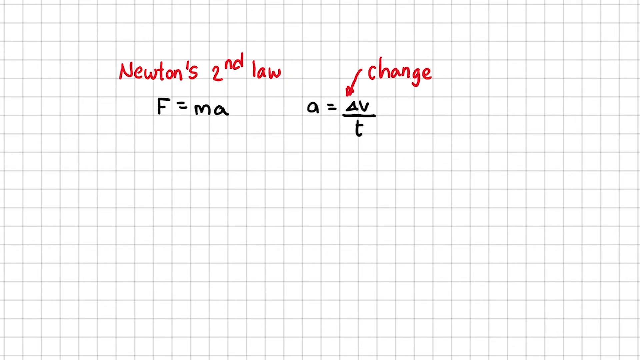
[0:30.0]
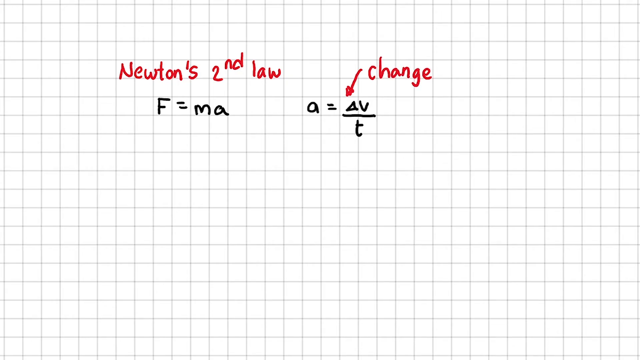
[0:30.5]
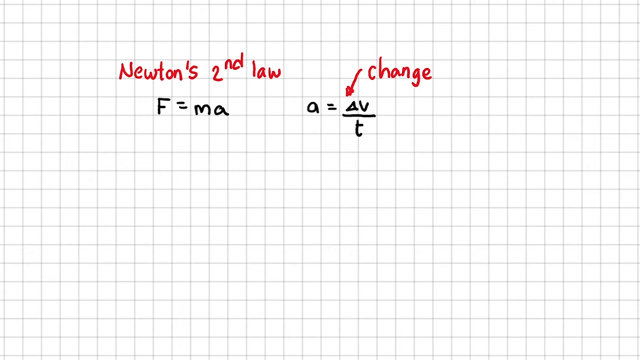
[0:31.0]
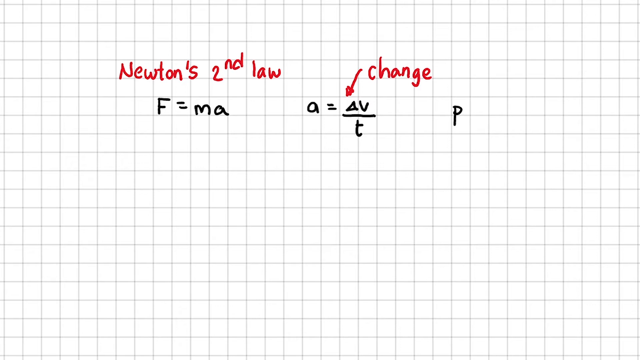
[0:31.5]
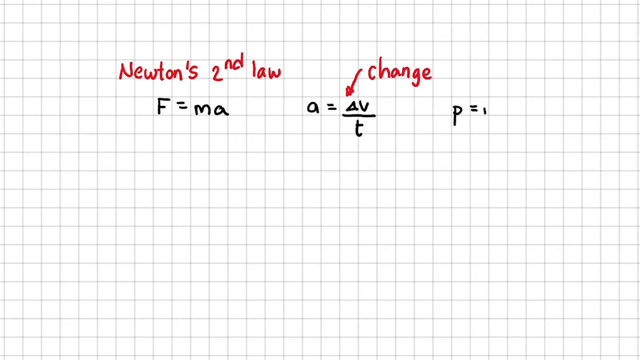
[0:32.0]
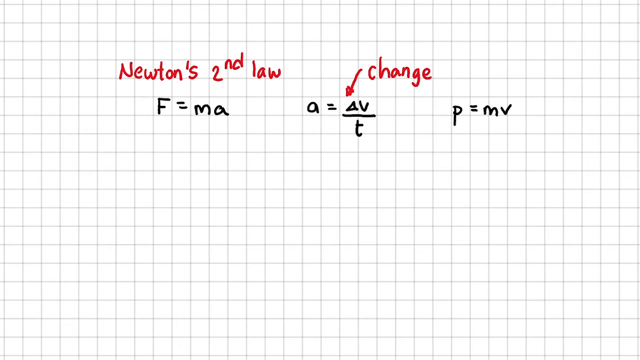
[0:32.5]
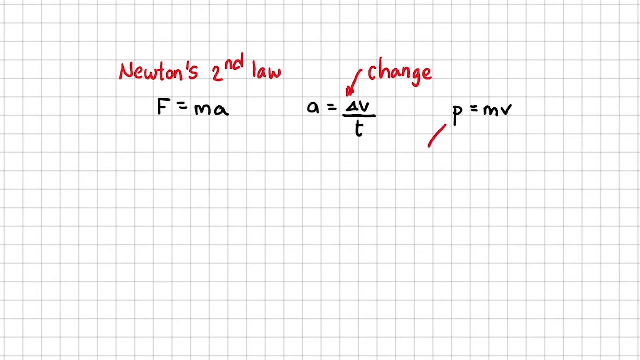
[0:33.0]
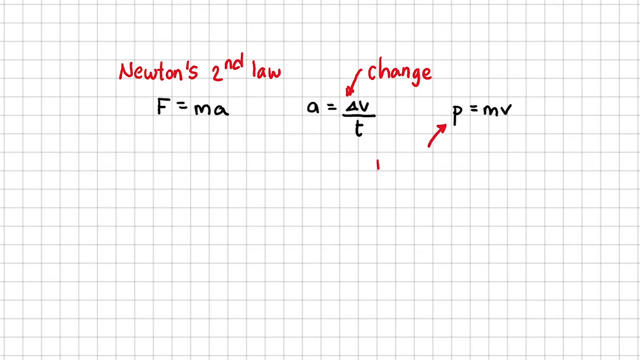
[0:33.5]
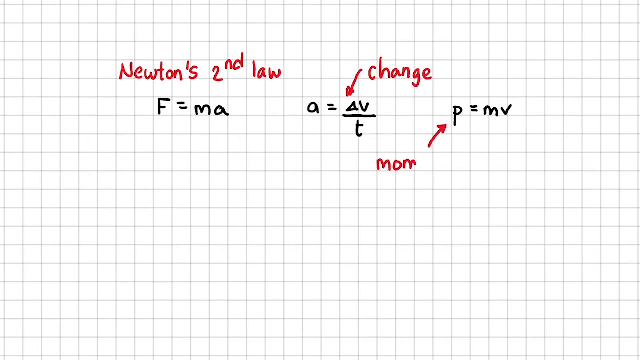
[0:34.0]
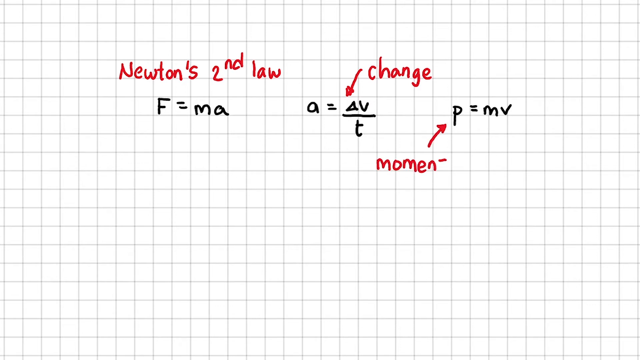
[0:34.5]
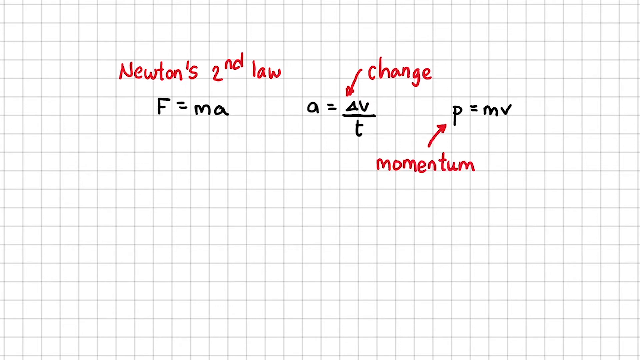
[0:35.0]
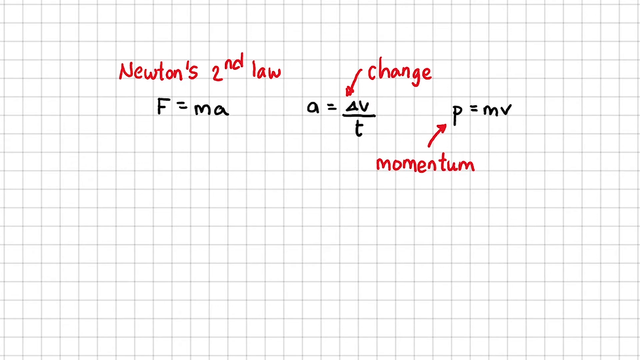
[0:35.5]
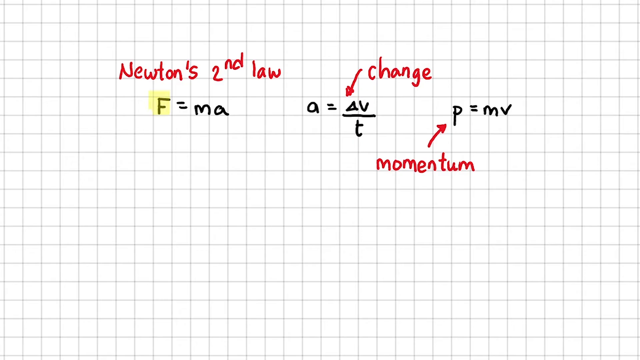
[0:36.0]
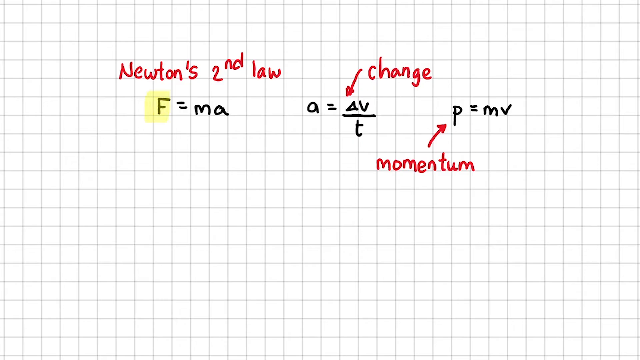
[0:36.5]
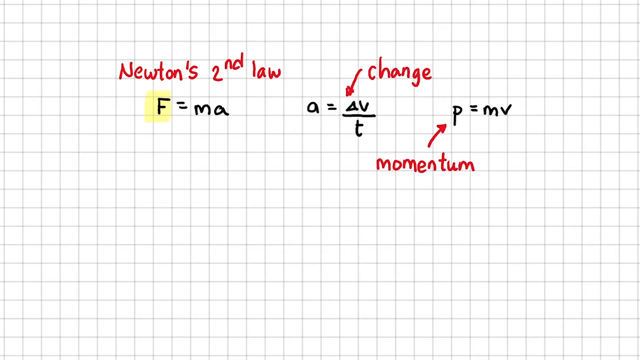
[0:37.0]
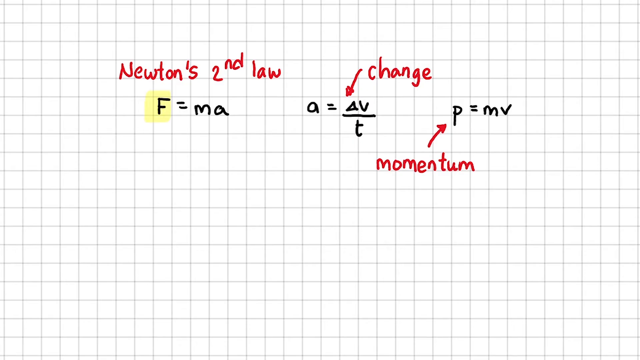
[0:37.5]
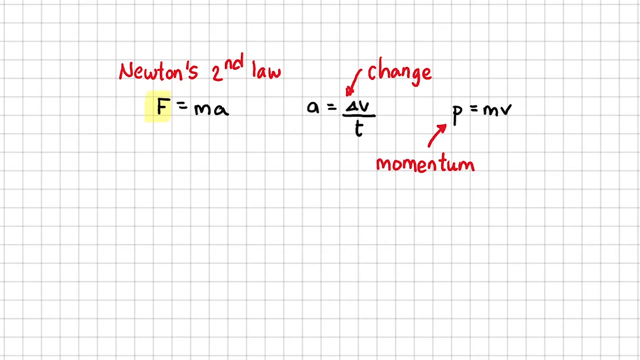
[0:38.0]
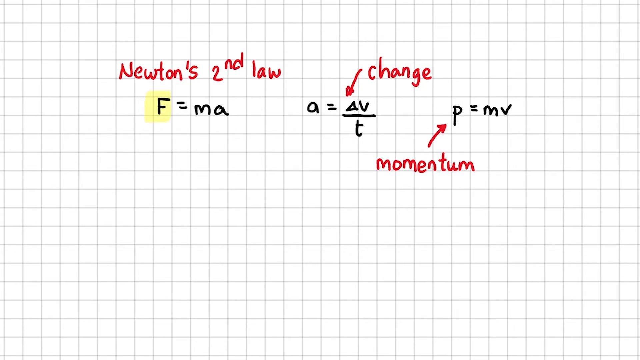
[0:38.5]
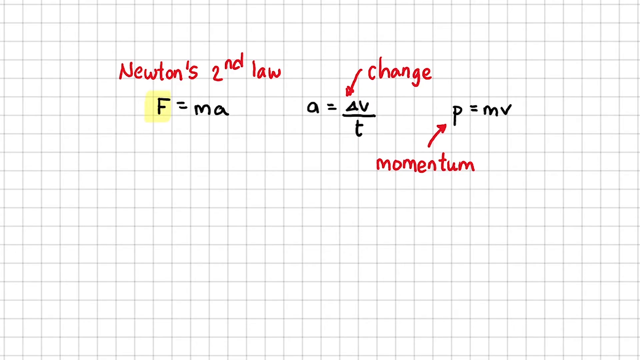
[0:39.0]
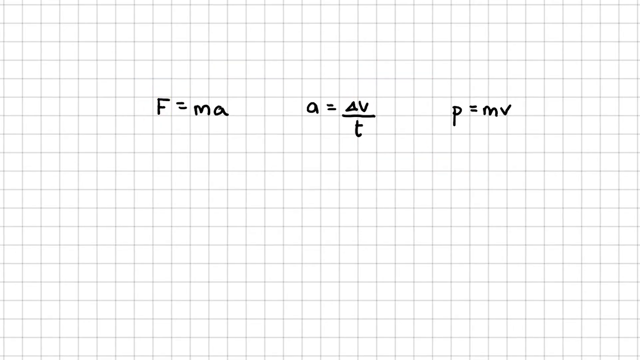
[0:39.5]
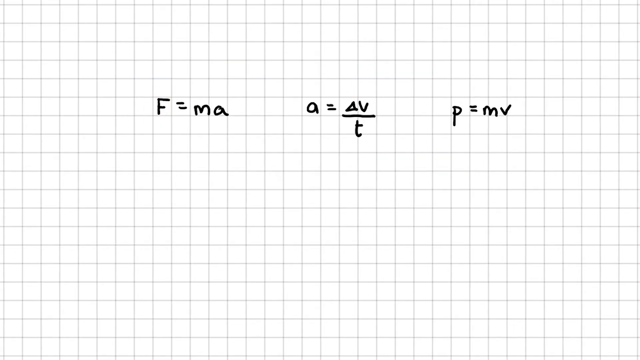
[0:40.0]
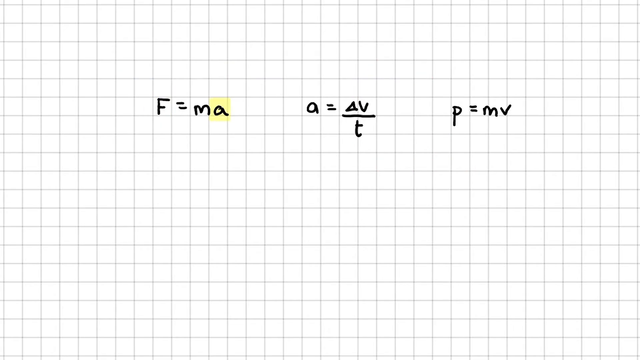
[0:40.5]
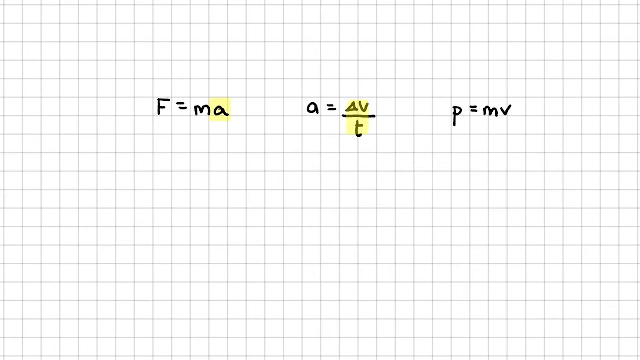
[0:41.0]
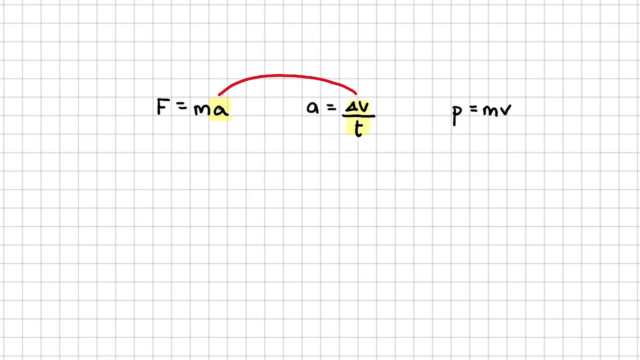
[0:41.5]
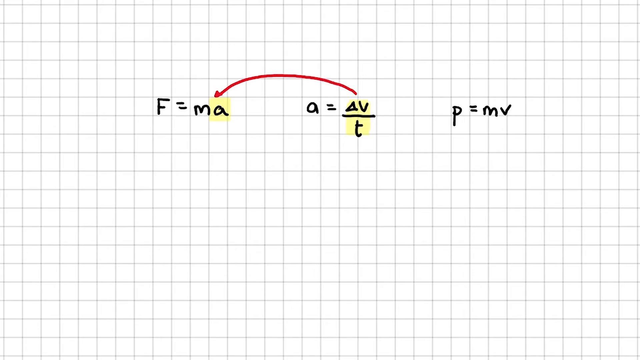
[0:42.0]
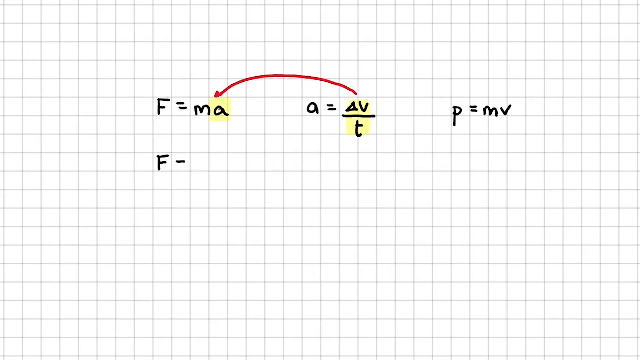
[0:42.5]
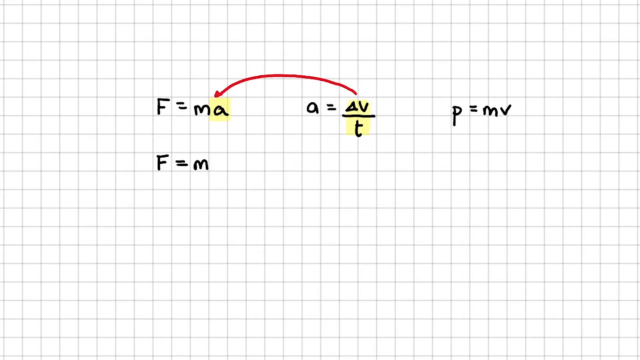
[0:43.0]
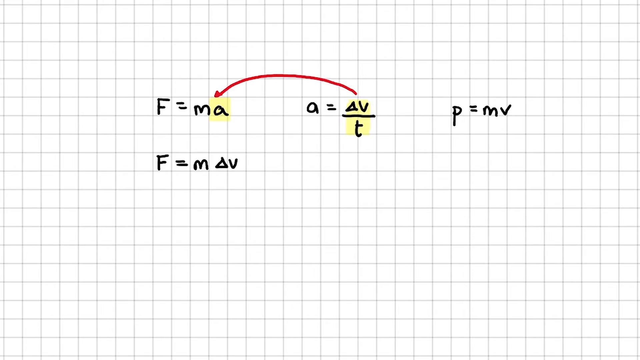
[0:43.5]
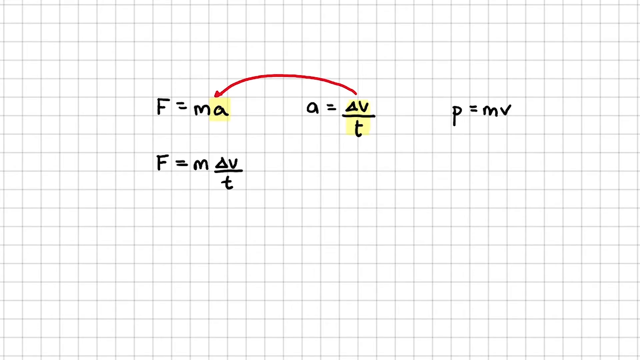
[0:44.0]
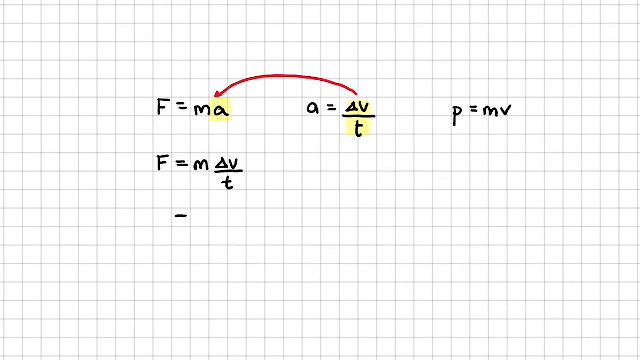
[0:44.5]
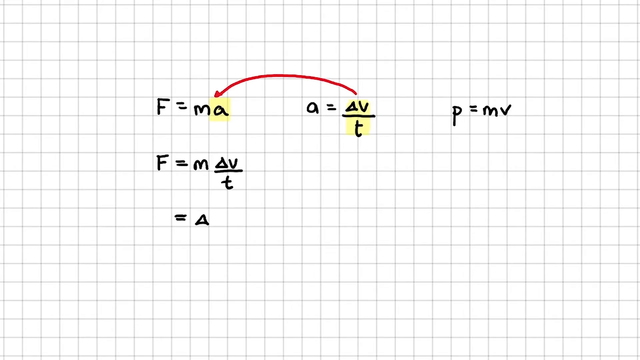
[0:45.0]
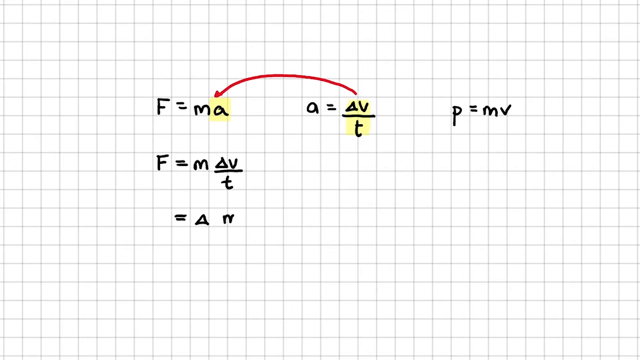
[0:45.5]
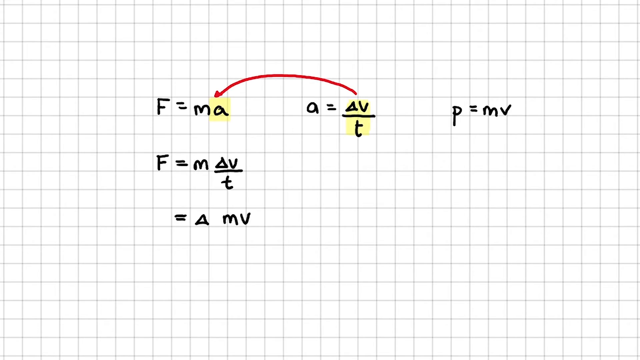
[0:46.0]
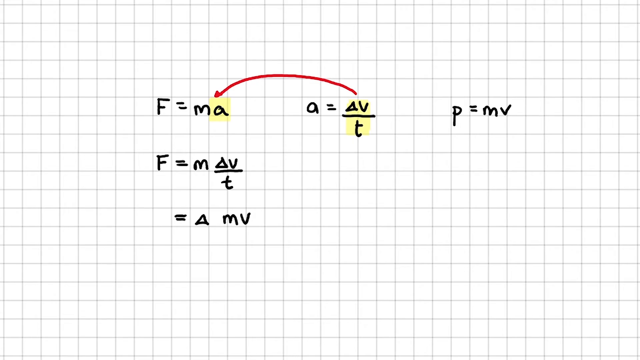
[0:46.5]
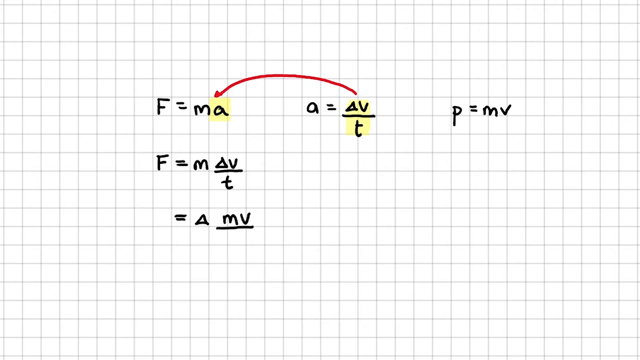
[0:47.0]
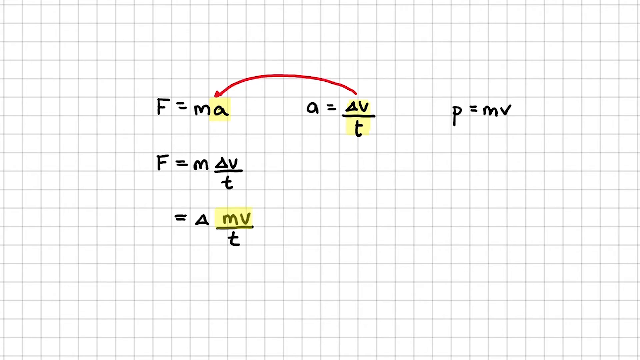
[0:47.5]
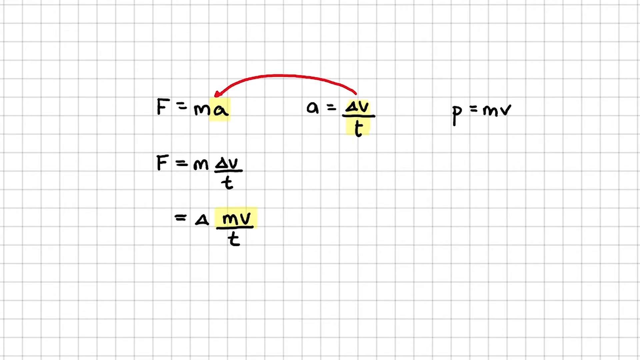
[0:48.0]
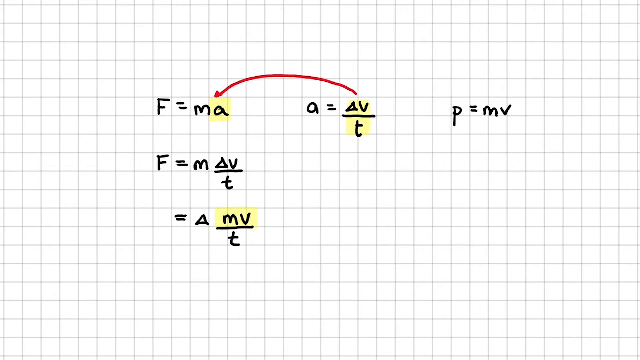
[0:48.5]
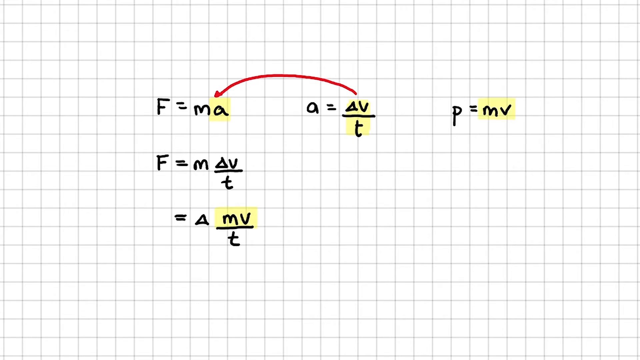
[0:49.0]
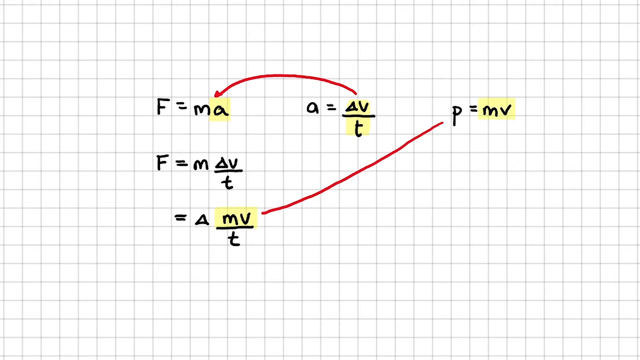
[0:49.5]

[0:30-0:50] A presentation screen with a graph-grid background shows physics formulas. "Newton's second law" is written in red at the top, and the formulas below it are in black. First "F=ma" is written, then after a few tab spaces "a=delta v/t". A small red arrow above the delta points toward it and is labeled "change" on its right side. After a few more tab spaces "p=mv" is written, a red arrow is drawn below it pointing at the p, and "momentum" is written in red letter by letter below the arrow. A yellow highlighter then highlights the F in the first formula. The red markings disappear, and the same yellow highlighter highlights the a in the first formula and delta v/t in the second. A red arrow is drawn from the second formula to the first. Below, "F=m delta v/t" is written, and below that "= delta mv/t", with its mv highlighted in yellow. The mv in the third formula on the first line is also highlighted, and a red arrow is drawn from p=mv to the latest formula. The deltas are represented by a small triangle.